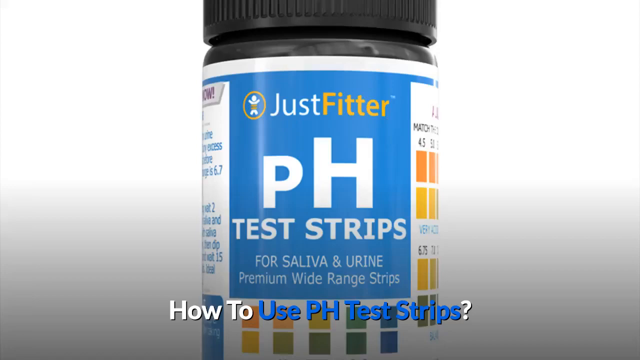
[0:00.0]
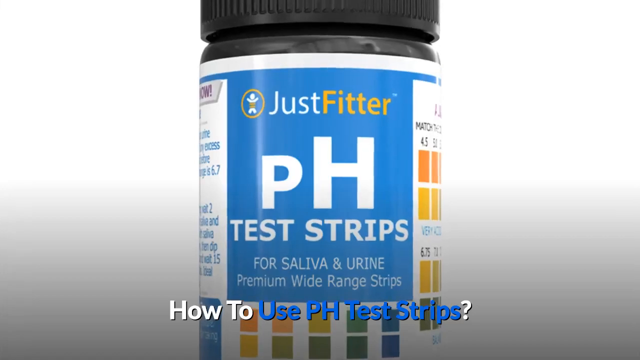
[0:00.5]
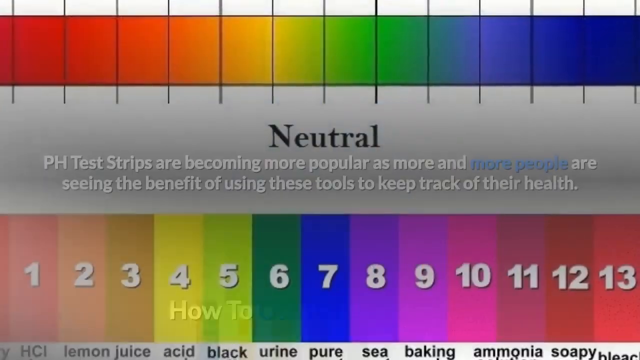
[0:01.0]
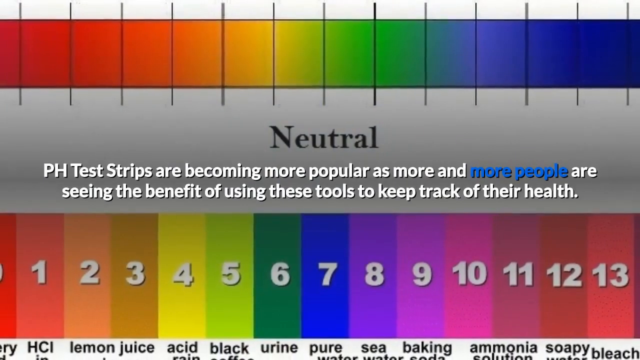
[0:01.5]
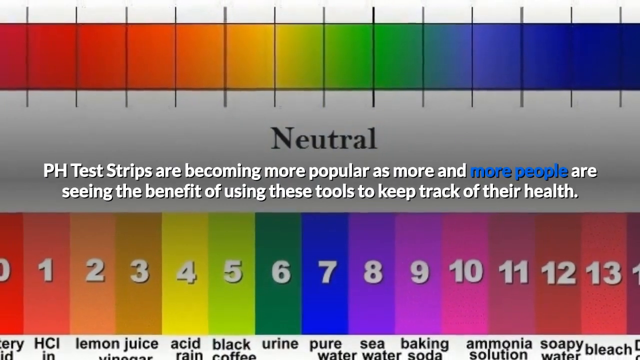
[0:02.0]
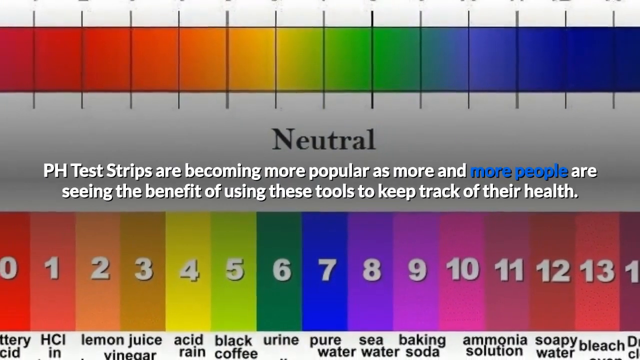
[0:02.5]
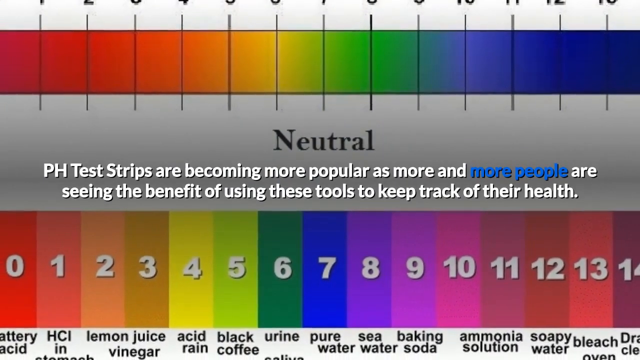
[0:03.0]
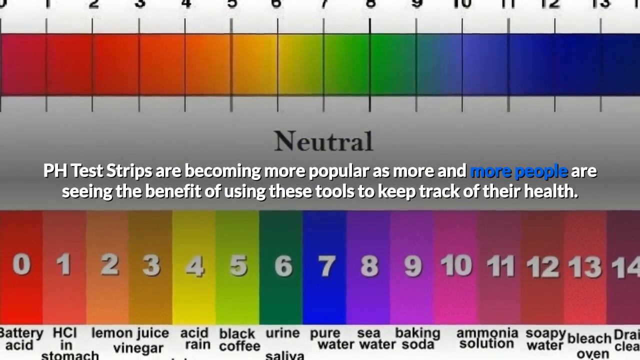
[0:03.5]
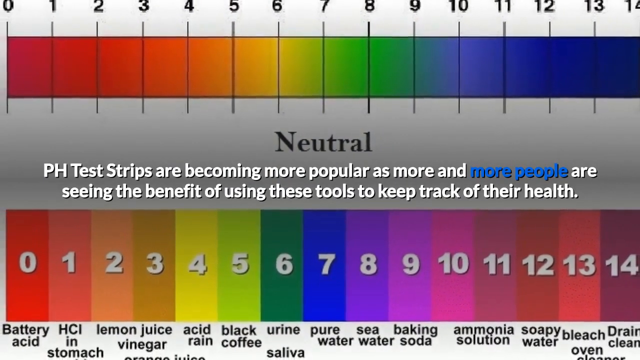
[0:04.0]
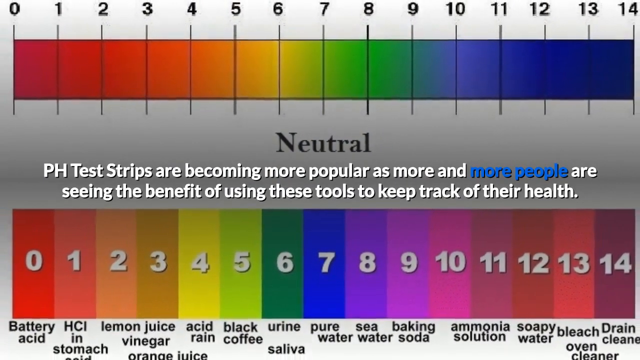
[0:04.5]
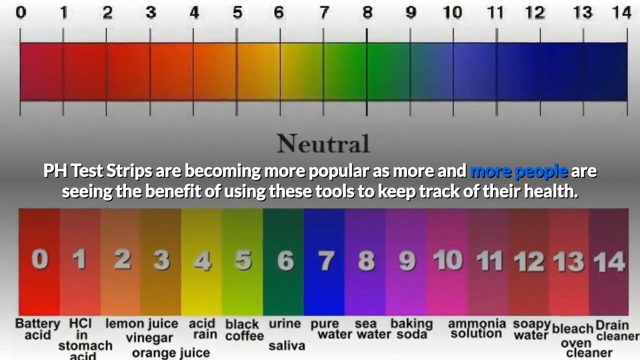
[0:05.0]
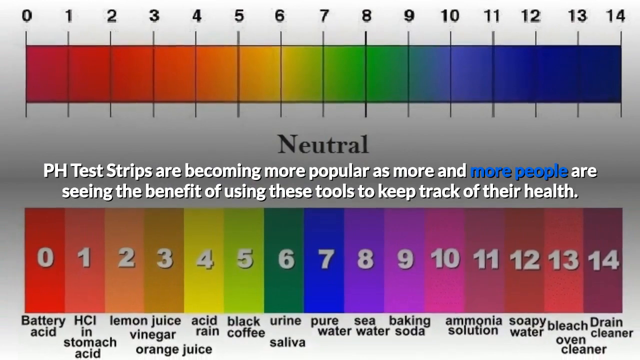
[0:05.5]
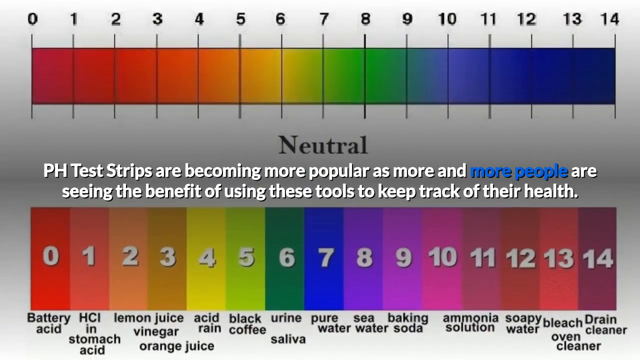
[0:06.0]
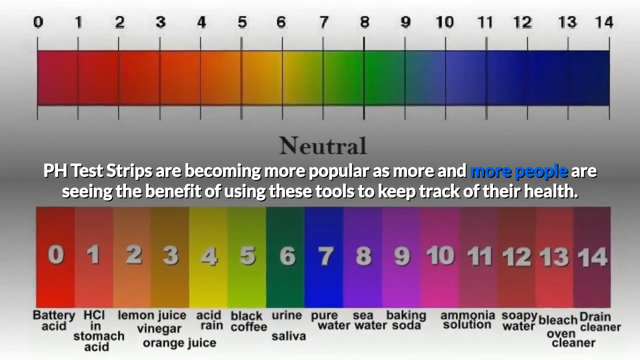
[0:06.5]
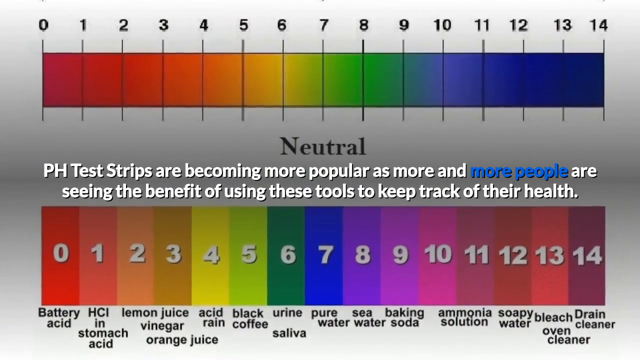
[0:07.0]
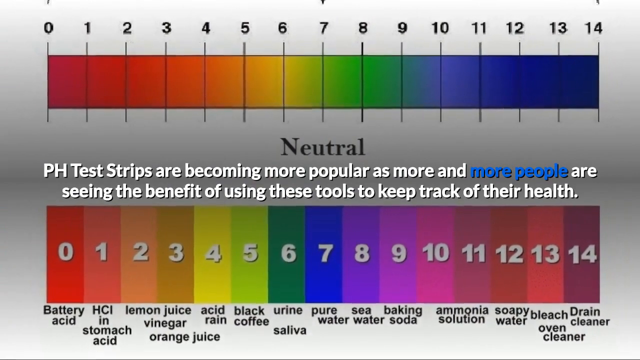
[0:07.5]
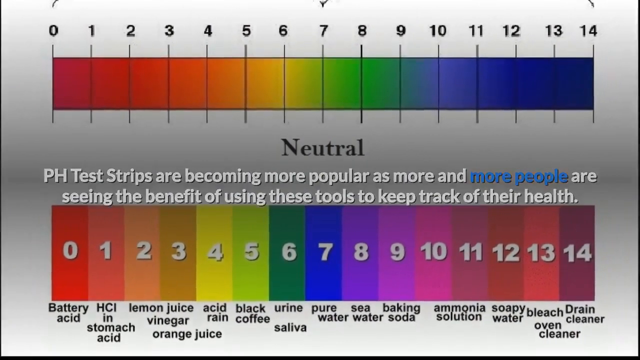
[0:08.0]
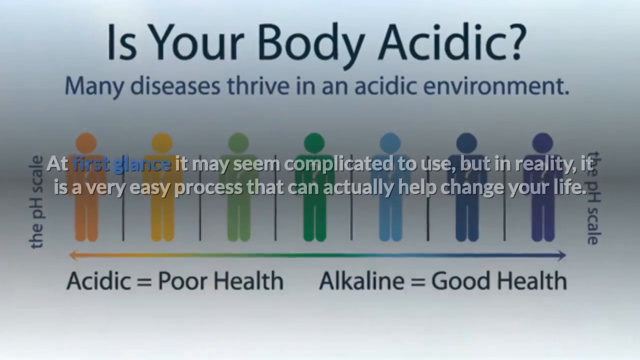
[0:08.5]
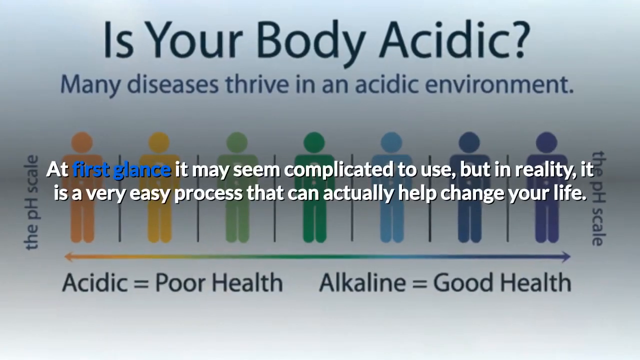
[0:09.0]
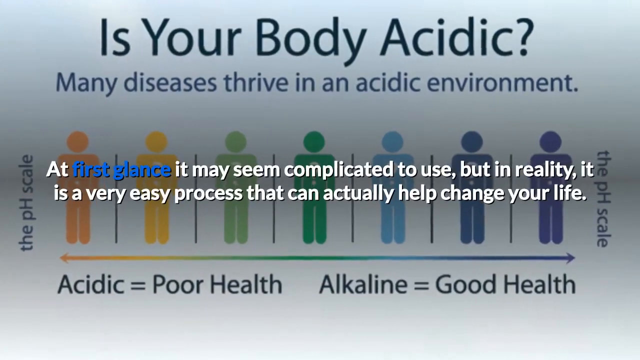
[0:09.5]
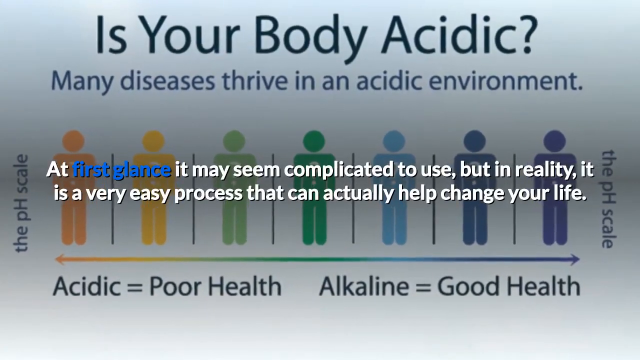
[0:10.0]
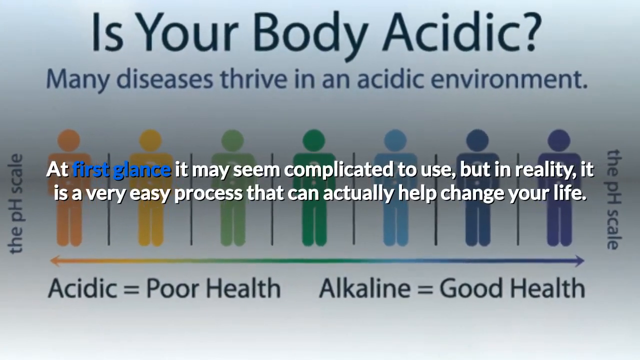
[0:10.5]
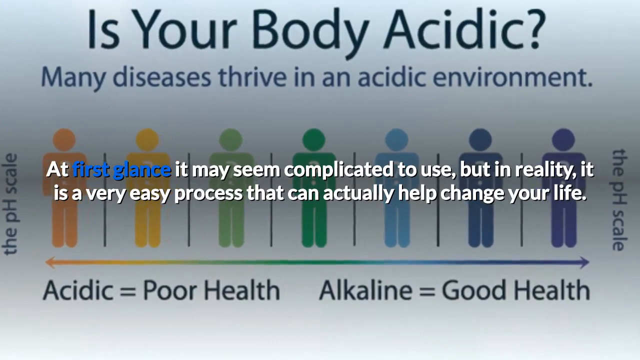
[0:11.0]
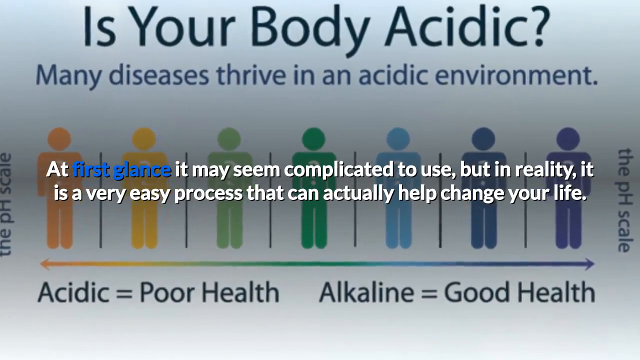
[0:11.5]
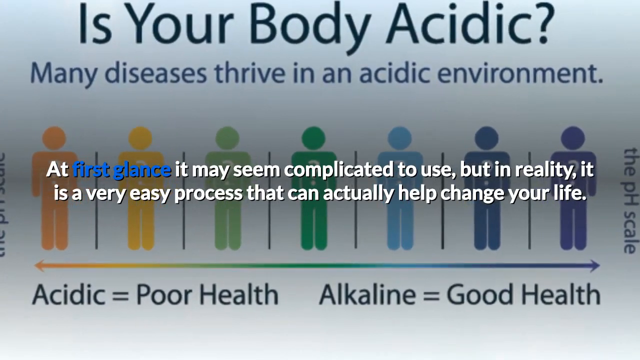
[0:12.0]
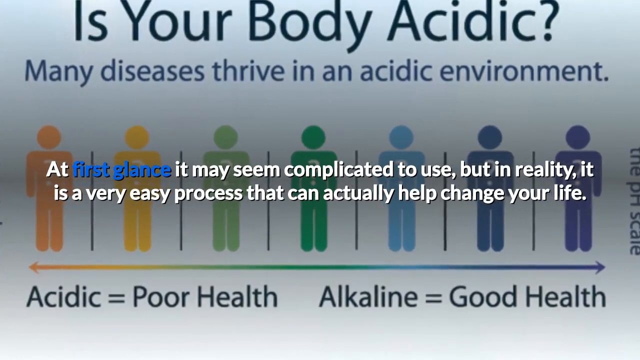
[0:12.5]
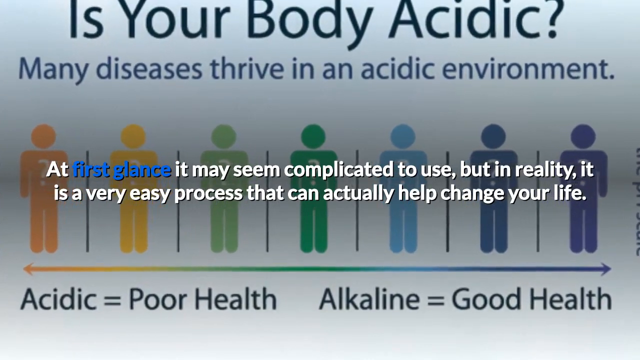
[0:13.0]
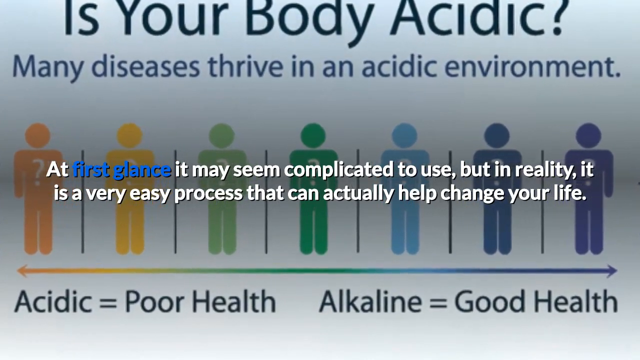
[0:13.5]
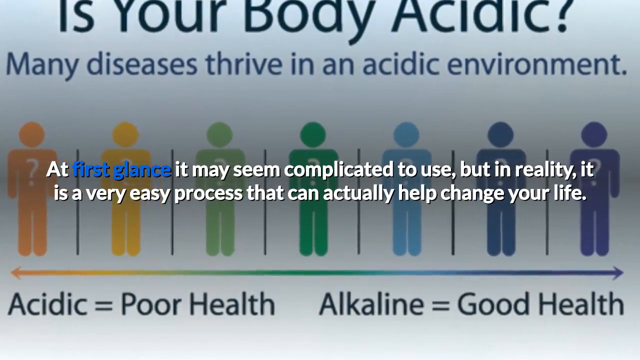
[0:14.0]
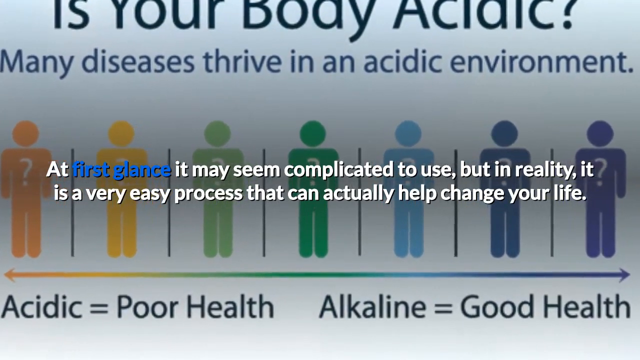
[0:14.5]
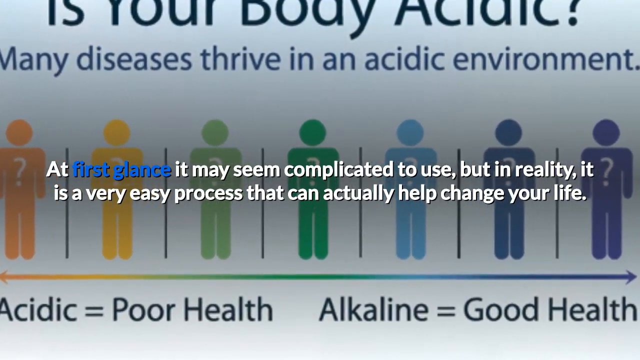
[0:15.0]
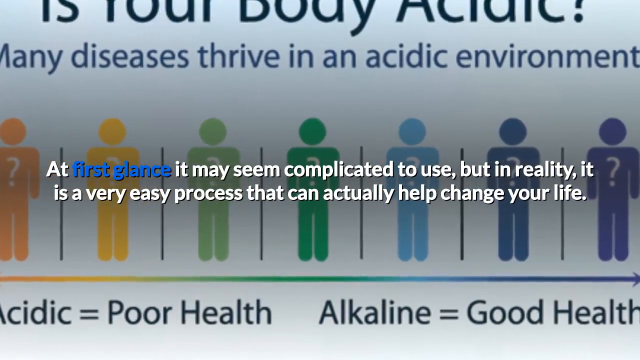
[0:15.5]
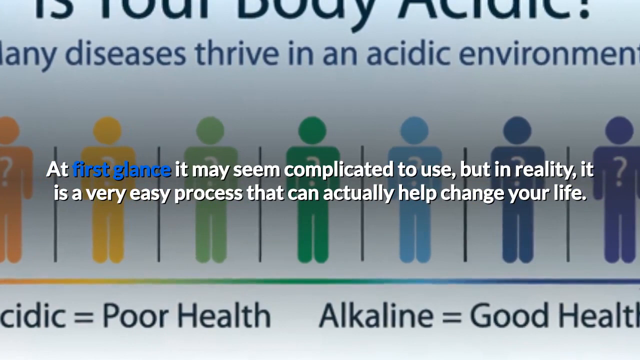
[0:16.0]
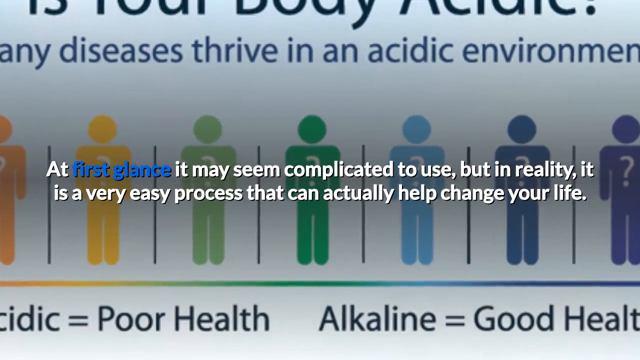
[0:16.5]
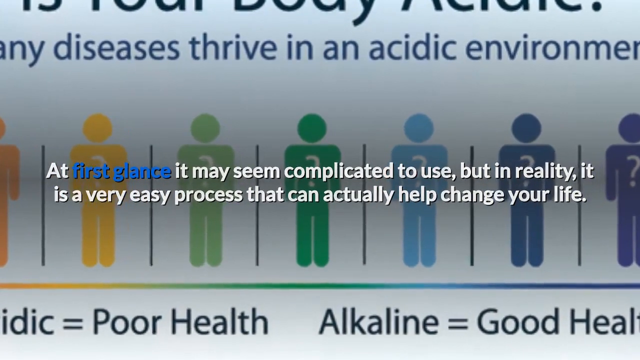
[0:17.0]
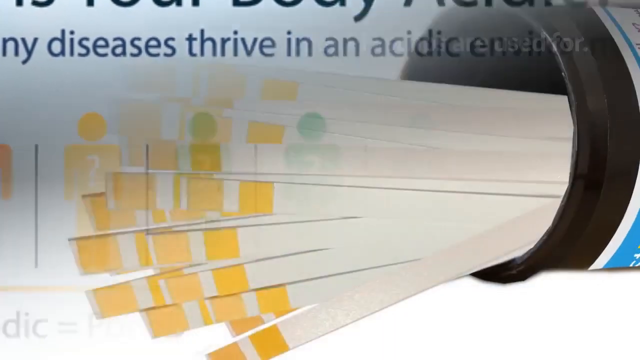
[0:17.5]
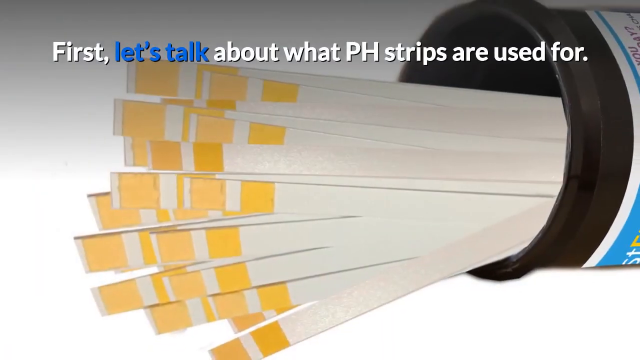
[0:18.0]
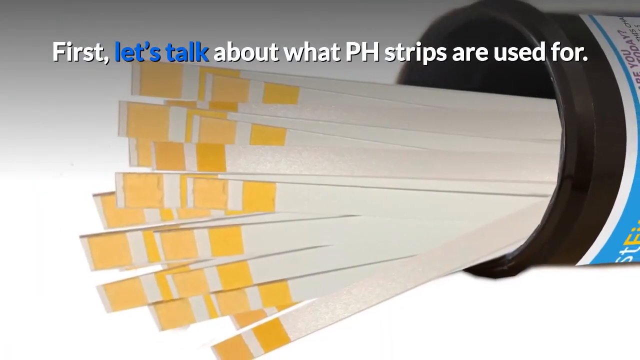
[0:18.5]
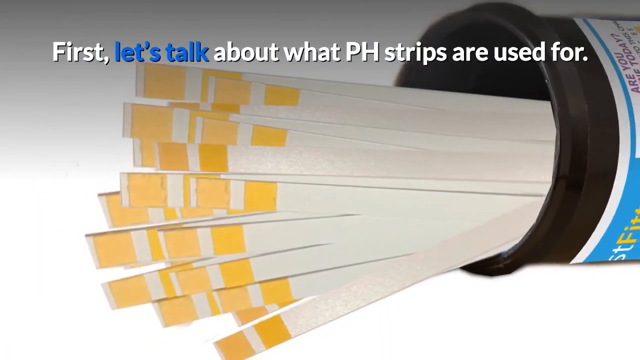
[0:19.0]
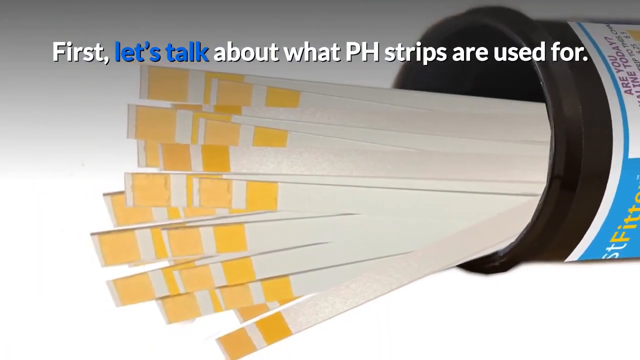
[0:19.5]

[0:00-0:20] A black bottle appears on screen; it looks to have things inside it and has a twist-off lid. The bottle reads "Just Fitter pH Test Strips for Saliva and Urine Premium Wide-Range Strips." A caption at the bottom reads "How to Use pH Test Strips," with "How to" in white text, "Use pH Test Strips" in blue text, and a white question mark at the end. The video then cuts to a page showing a rainbow diagram with a strip of colors: red on the left, turning orange, yellow, green, and finally blue toward the right. Many lines cut across this multicolored strip, and "Neutral" is written below it. In the middle of the screen, text reads "pH Test Strips are becoming more popular as more and more people are seeing the benefits of using these tools to keep track of their health." Below, a scale runs from 0 to 14, with a different color behind each number.